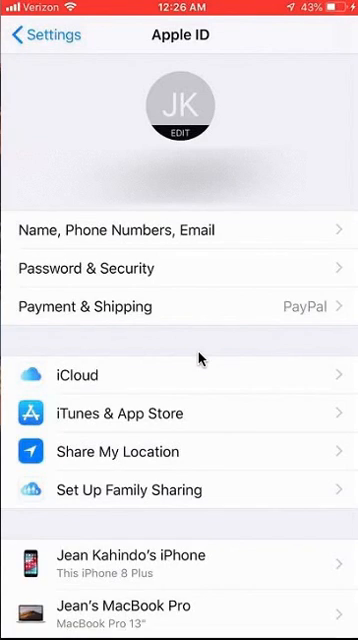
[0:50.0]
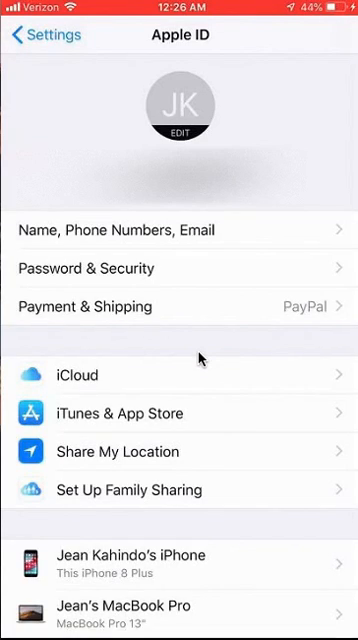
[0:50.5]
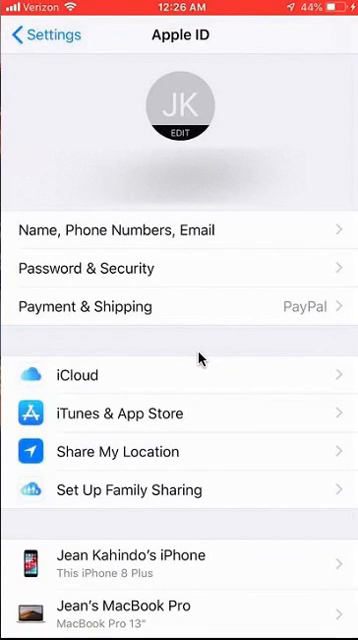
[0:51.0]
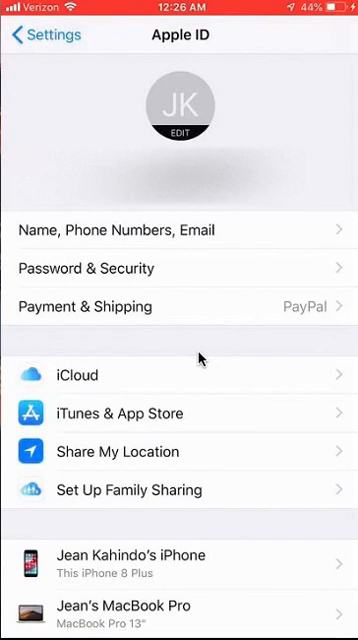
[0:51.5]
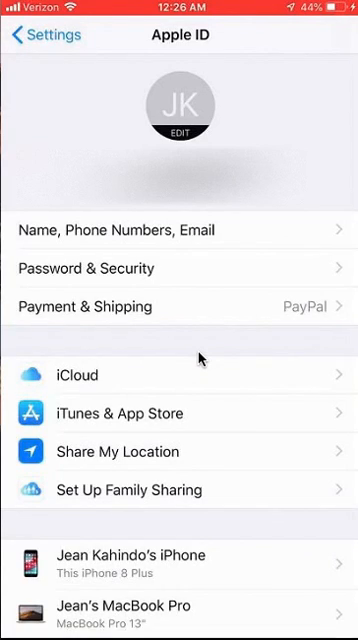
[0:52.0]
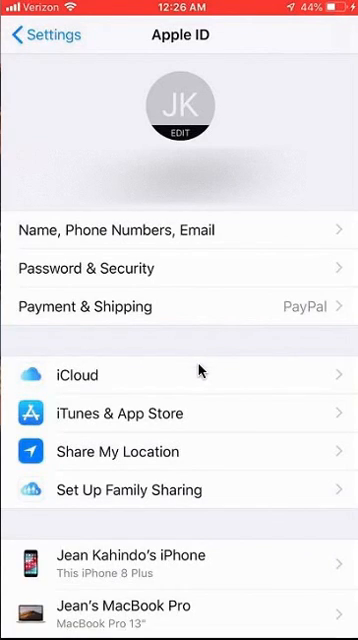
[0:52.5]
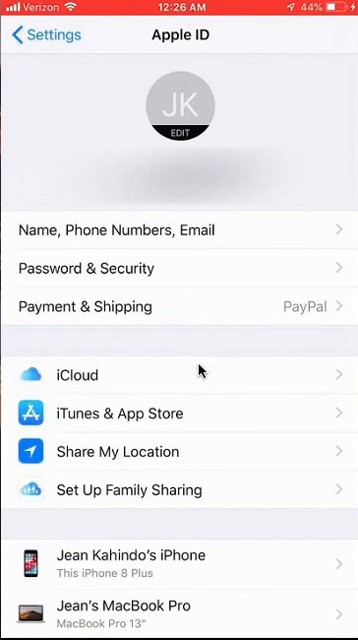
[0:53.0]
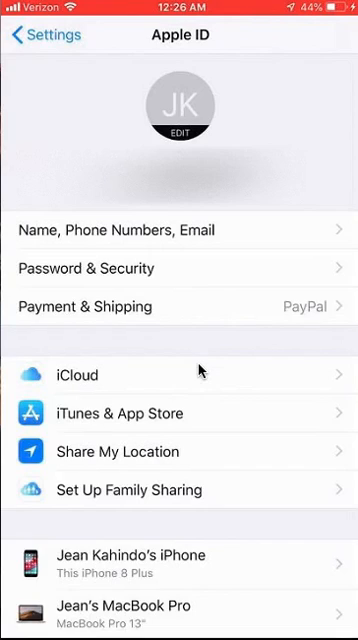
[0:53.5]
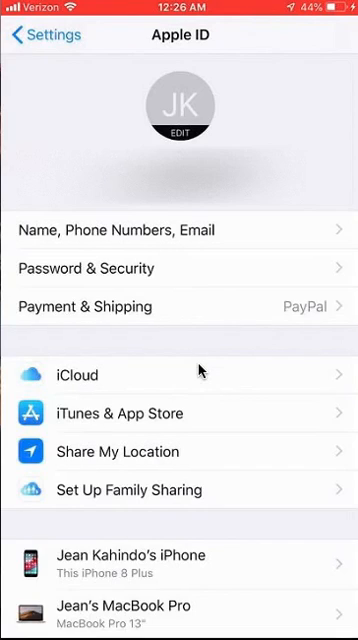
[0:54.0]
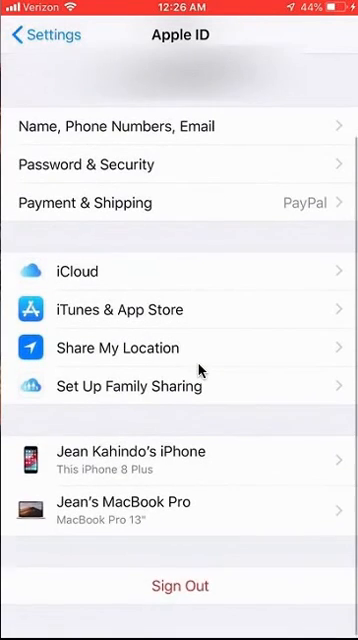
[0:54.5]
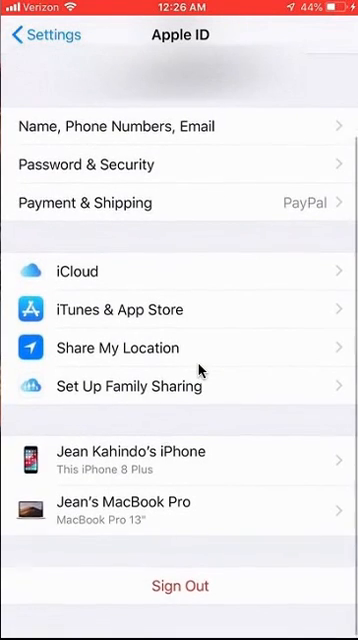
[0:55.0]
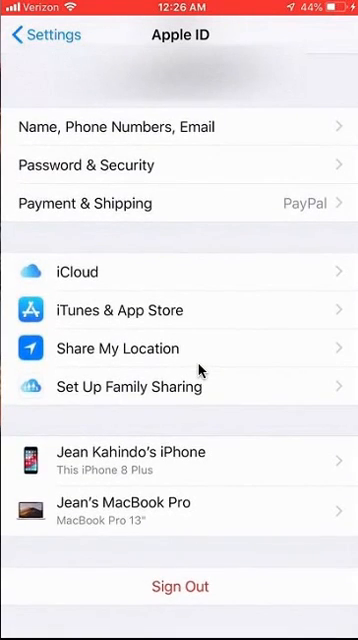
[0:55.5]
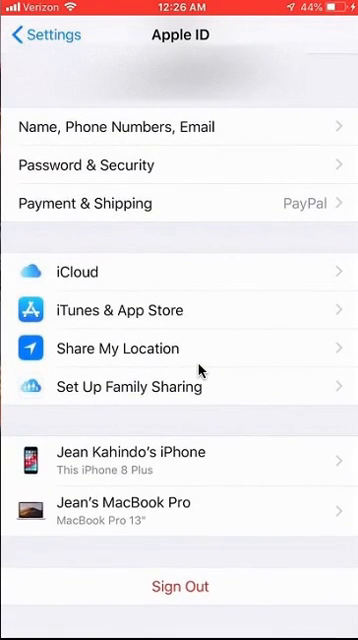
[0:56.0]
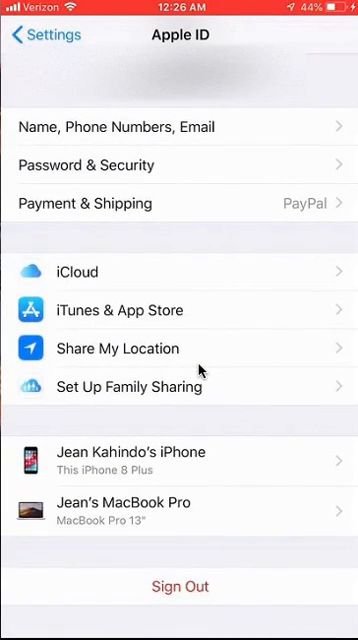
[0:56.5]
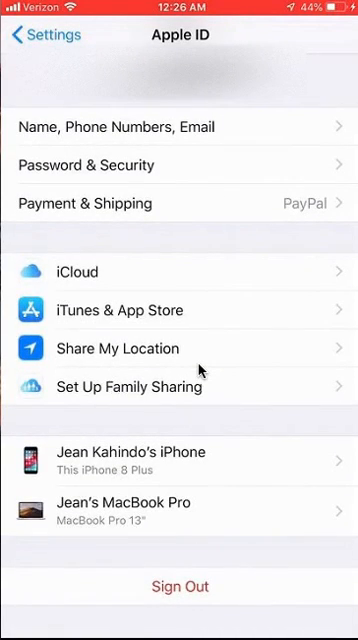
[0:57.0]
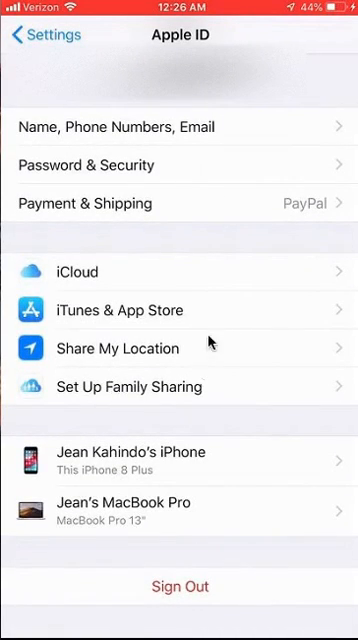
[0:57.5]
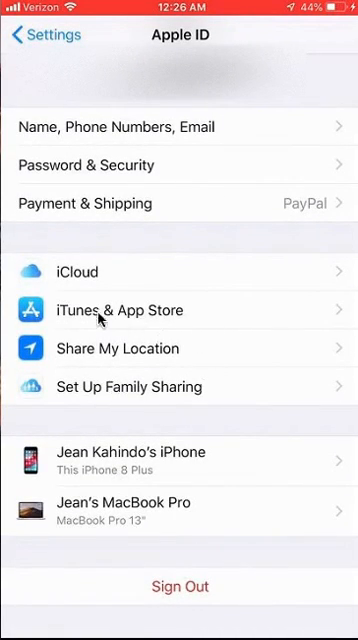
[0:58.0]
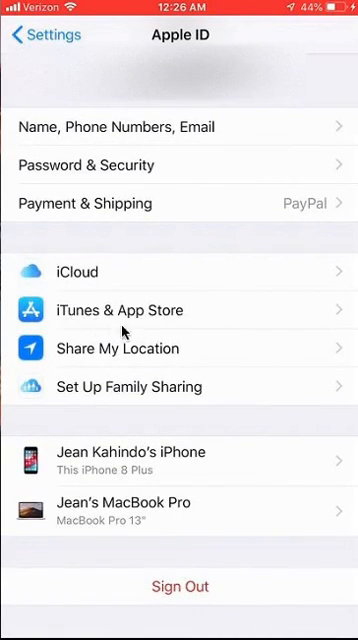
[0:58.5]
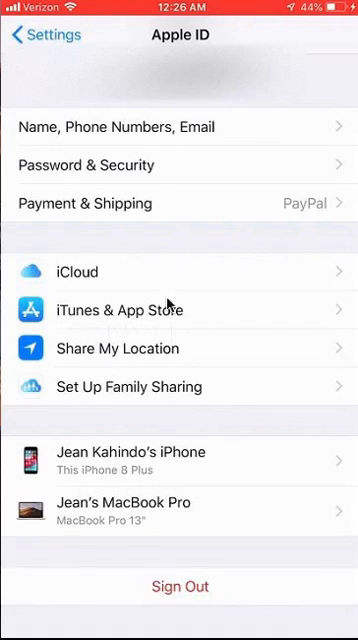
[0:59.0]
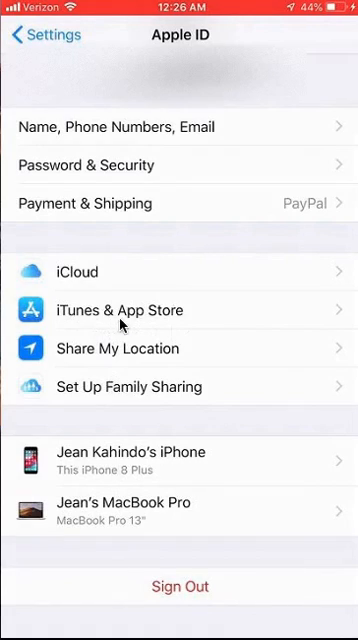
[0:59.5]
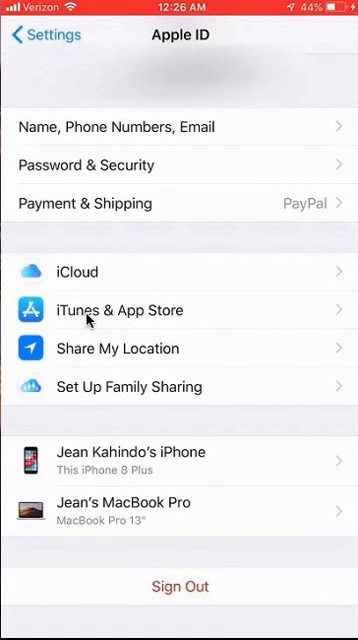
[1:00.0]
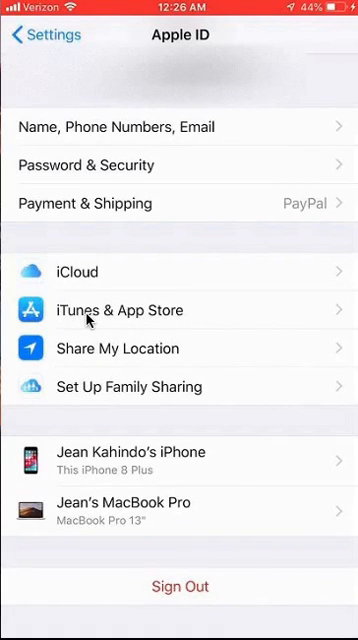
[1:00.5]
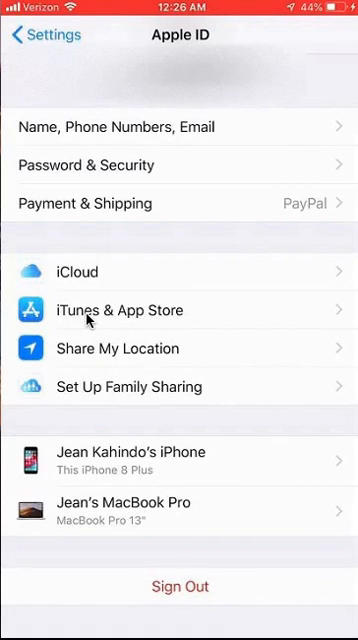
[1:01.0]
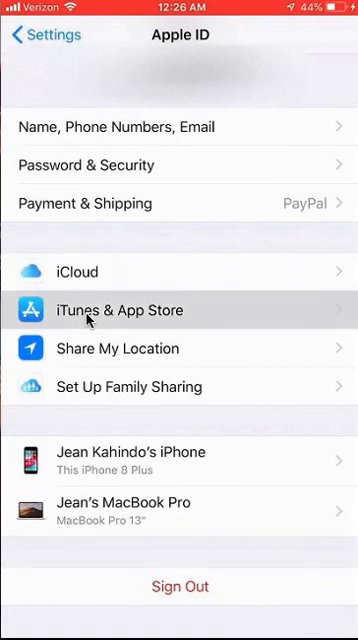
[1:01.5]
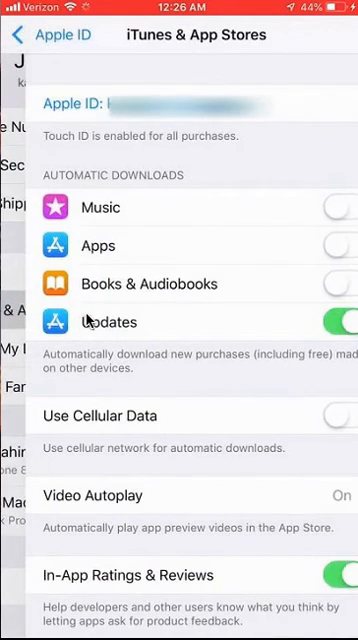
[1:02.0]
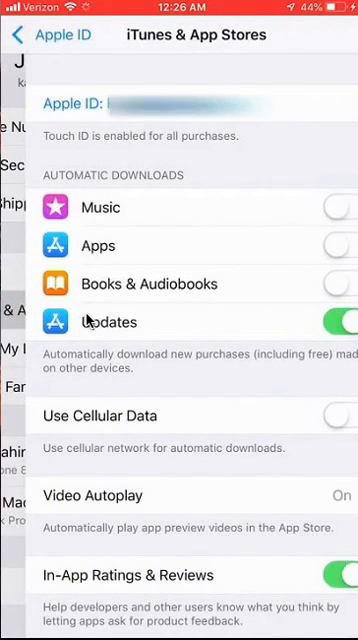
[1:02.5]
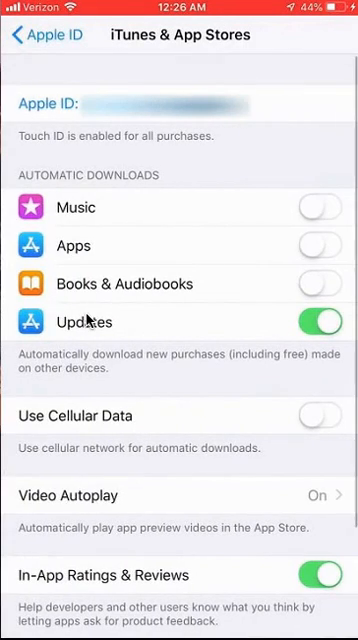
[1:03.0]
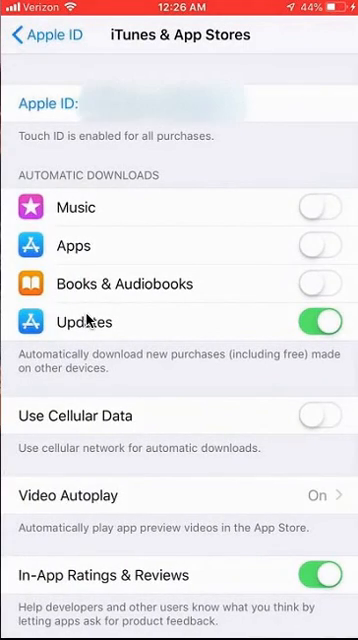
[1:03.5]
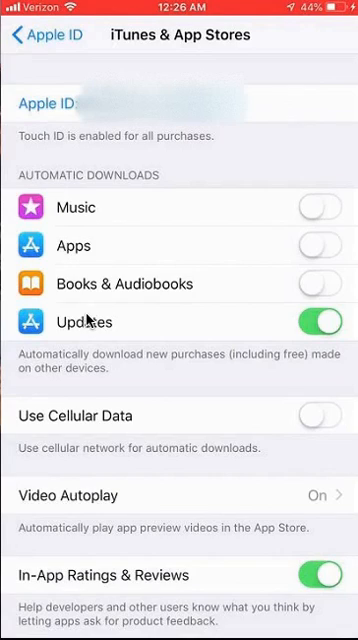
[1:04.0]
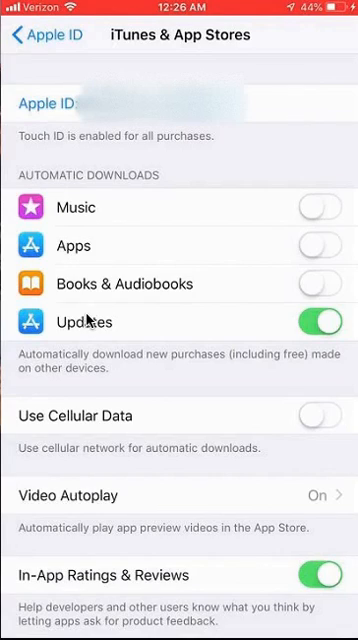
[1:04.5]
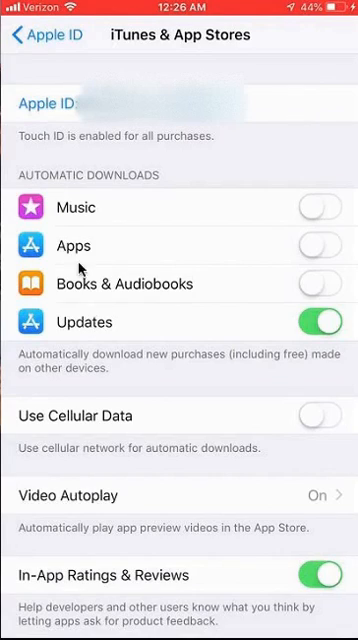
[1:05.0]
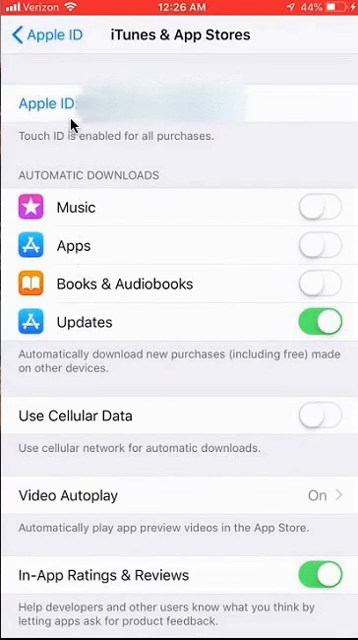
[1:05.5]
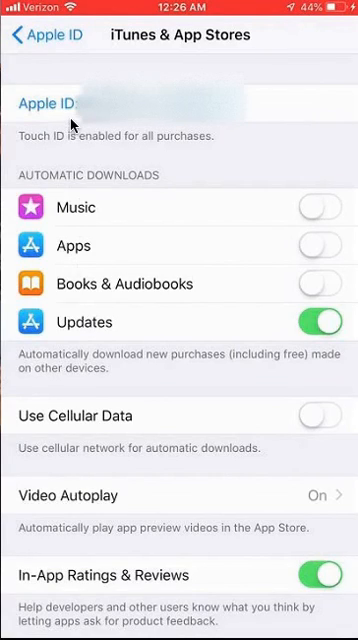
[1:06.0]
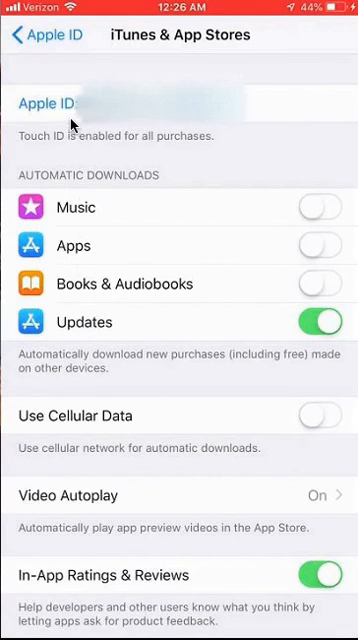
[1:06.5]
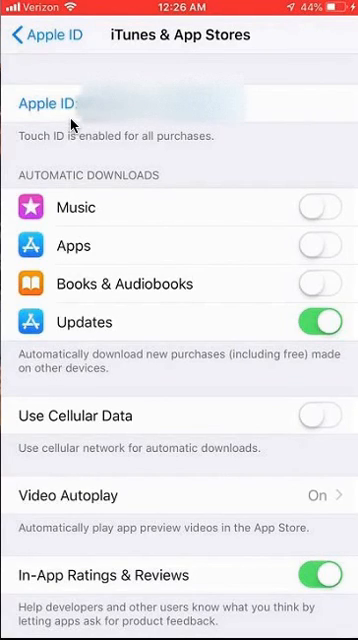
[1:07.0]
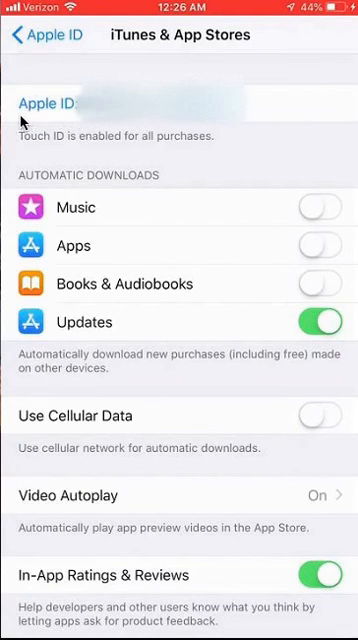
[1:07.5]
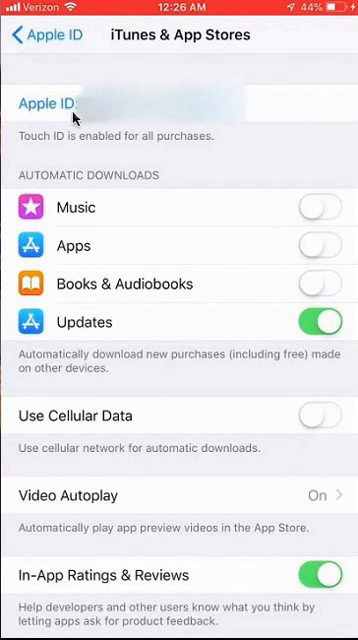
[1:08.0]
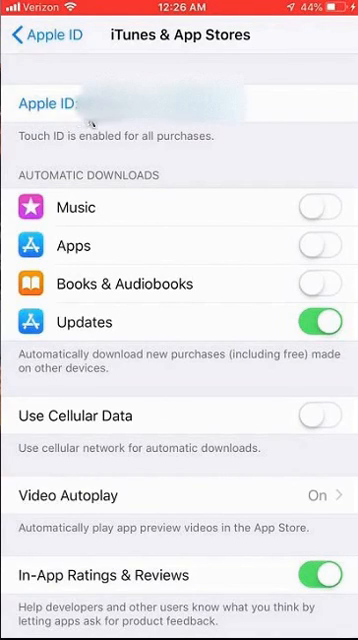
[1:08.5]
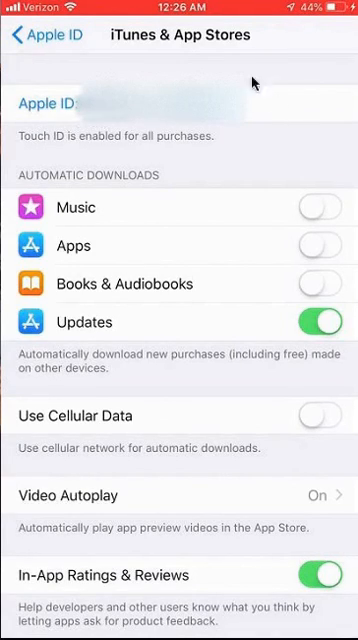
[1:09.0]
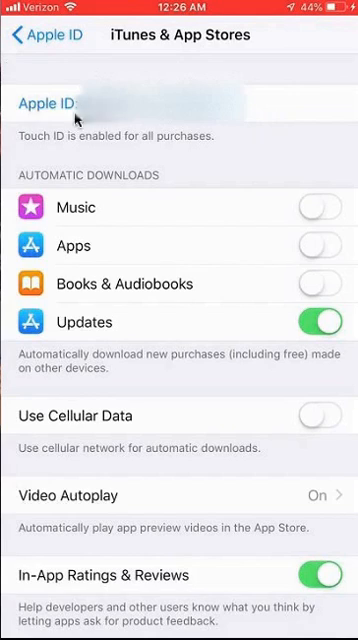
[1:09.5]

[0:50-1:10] The person continues screen recording the phone on the Apple ID page in settings and scrolls down to show more of it: name, phone numbers, email, password and security, payment and shipping, iCloud, iTunes and App Store, share my location, setup, family sharing, Jeanne Cahindo's iPhone, and Jeanne's MacBook Pro. They circle around iTunes and App Store and click into it. There, the Apple ID is blurred out. Below it are automatic downloads, music, apps, books and audiobooks, updates, automatically download new purchases including free made on other devices, use cellular data, use cellular network for automatic downloads, video audio play, automatically play app preview videos in the App Store, and in-app ratings and reviews, which helps developers and other users know what you think by letting apps ask for product feedback. All of these have toggle options.